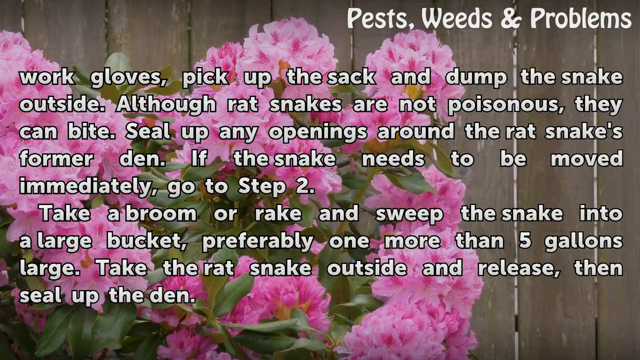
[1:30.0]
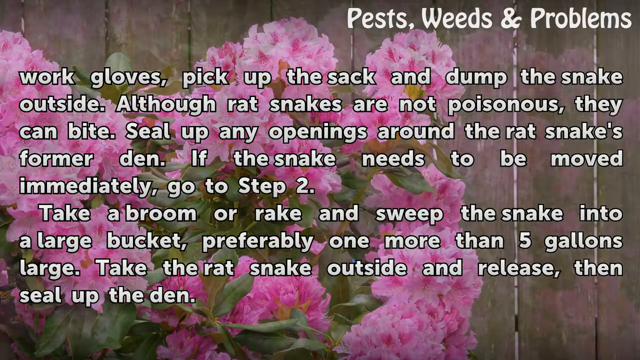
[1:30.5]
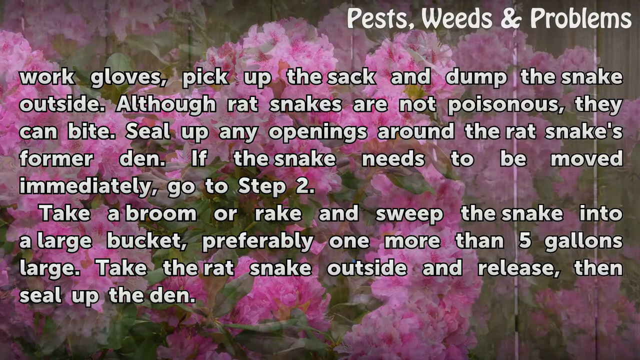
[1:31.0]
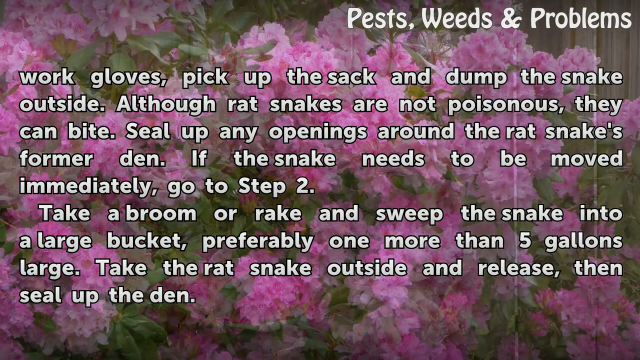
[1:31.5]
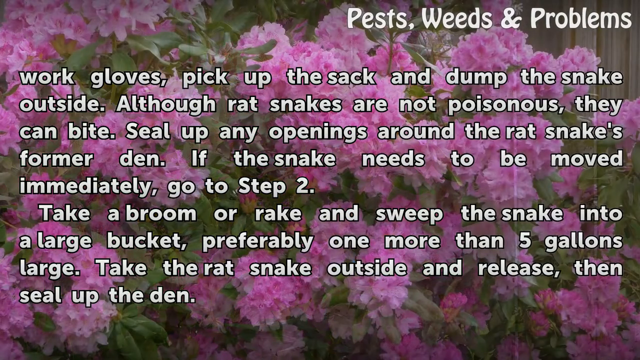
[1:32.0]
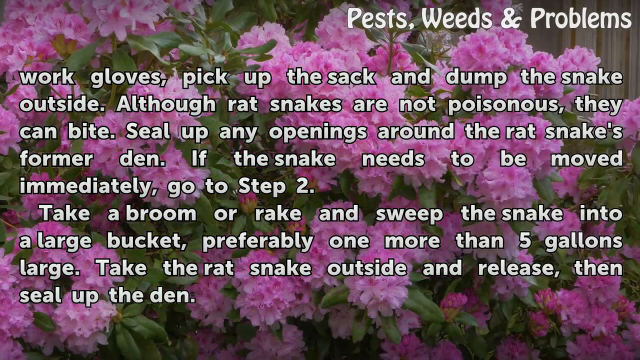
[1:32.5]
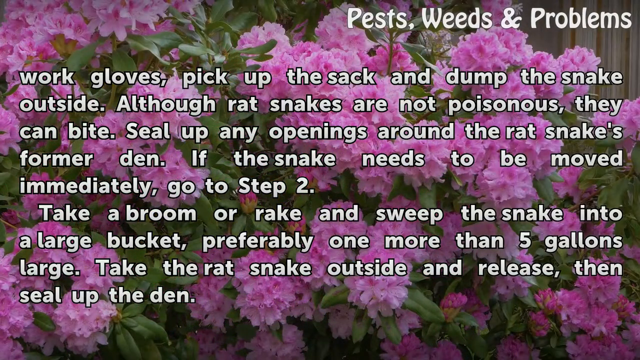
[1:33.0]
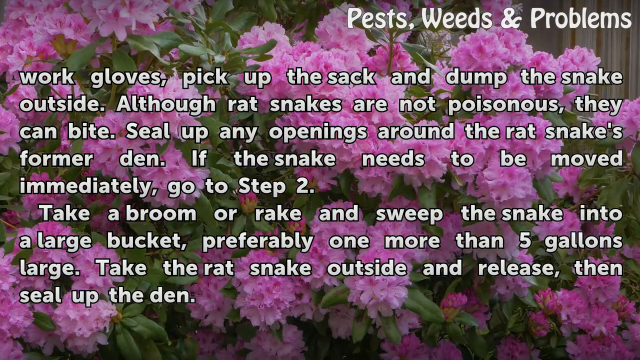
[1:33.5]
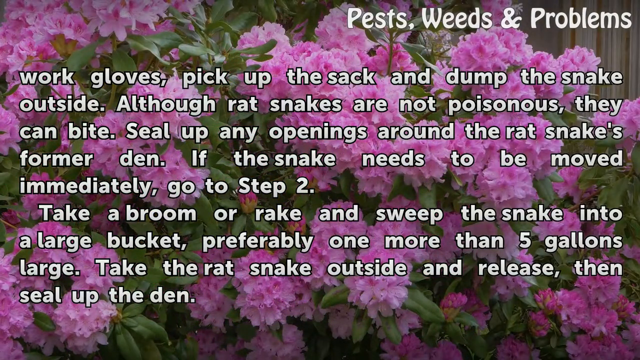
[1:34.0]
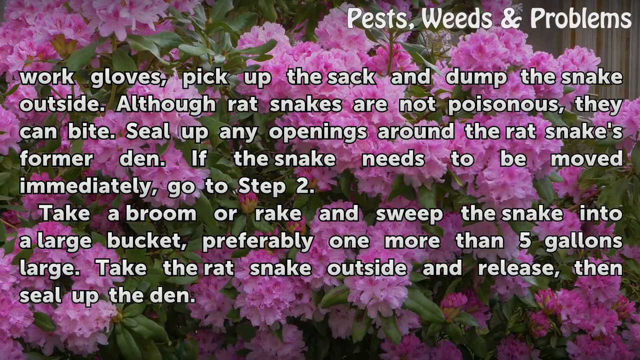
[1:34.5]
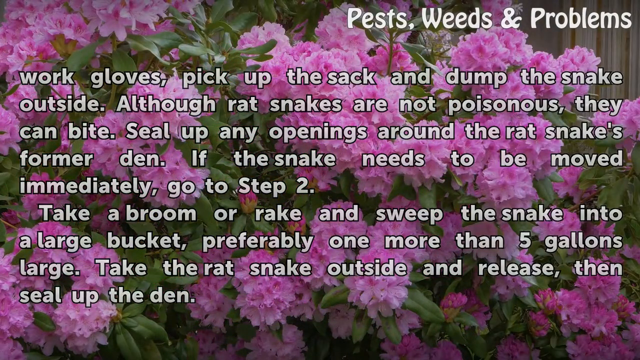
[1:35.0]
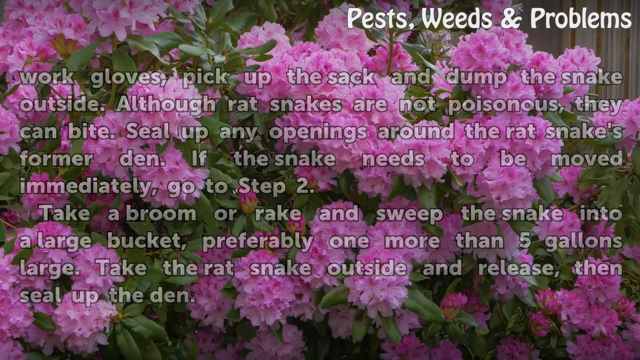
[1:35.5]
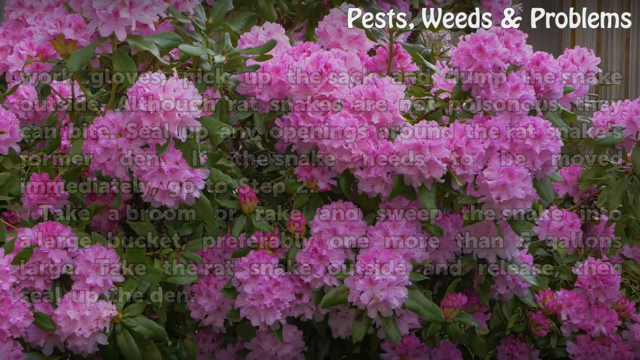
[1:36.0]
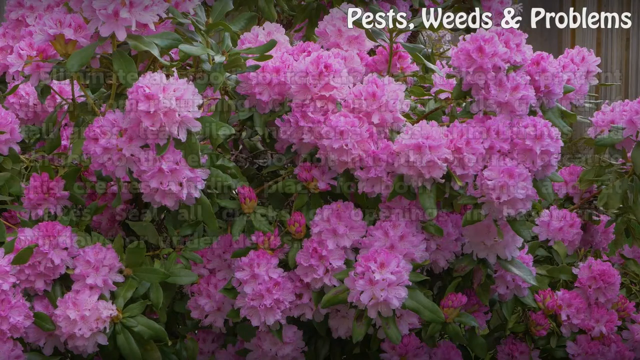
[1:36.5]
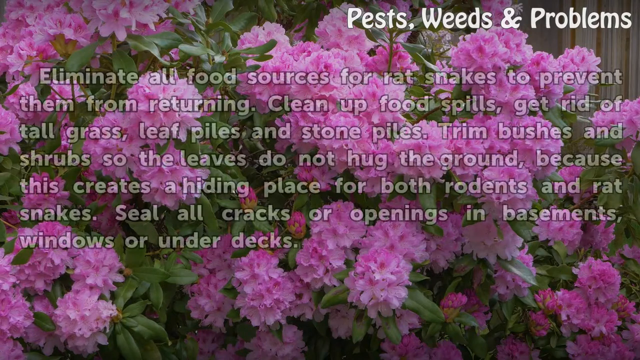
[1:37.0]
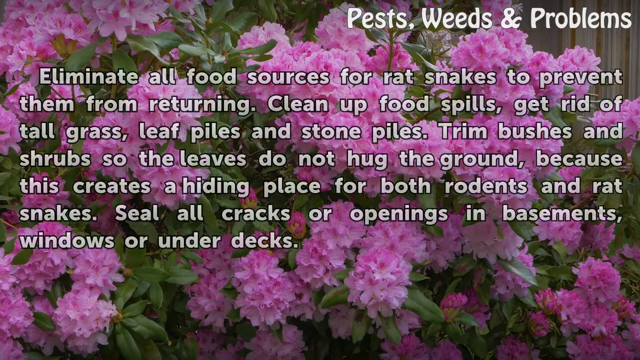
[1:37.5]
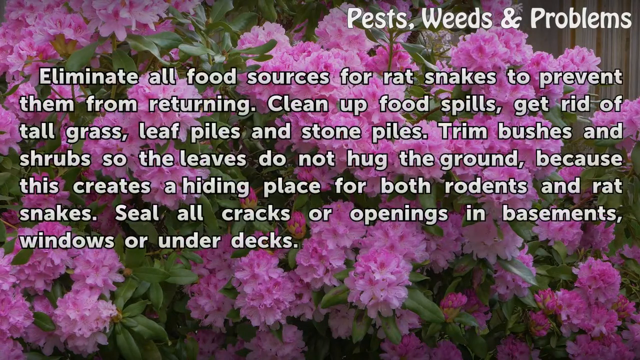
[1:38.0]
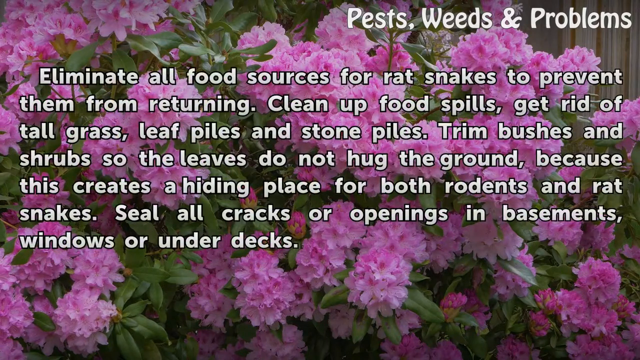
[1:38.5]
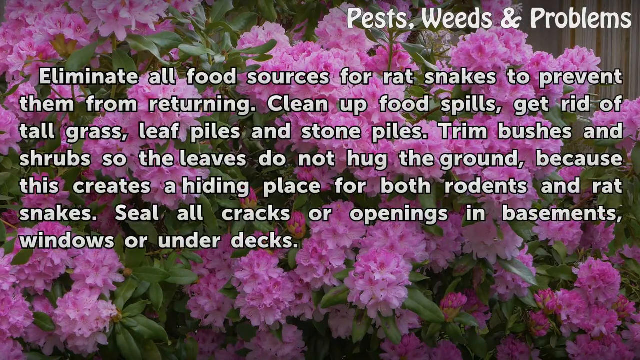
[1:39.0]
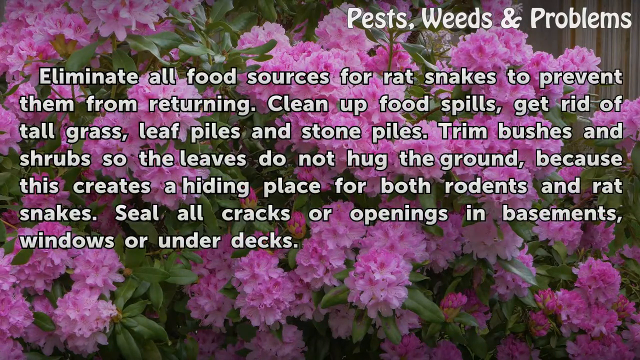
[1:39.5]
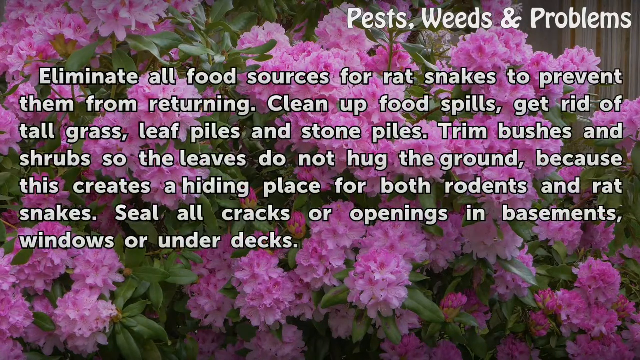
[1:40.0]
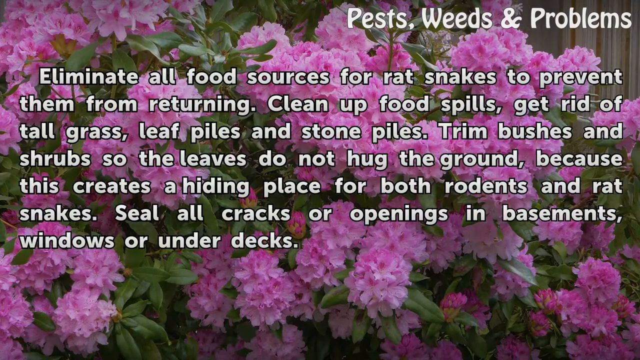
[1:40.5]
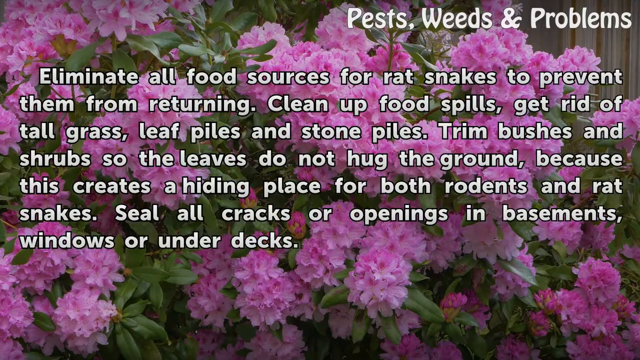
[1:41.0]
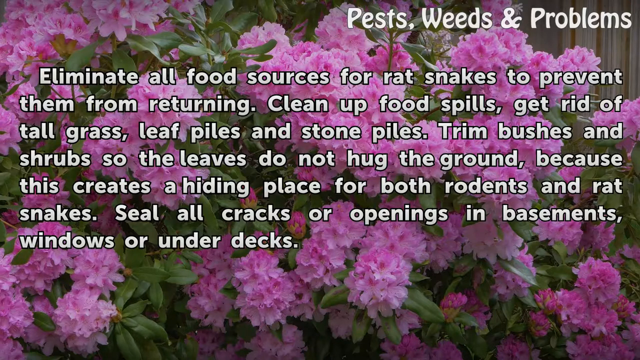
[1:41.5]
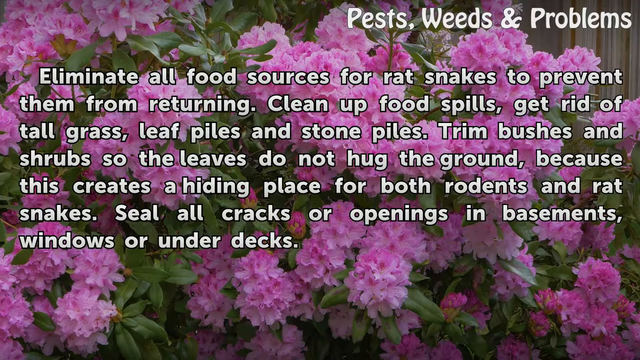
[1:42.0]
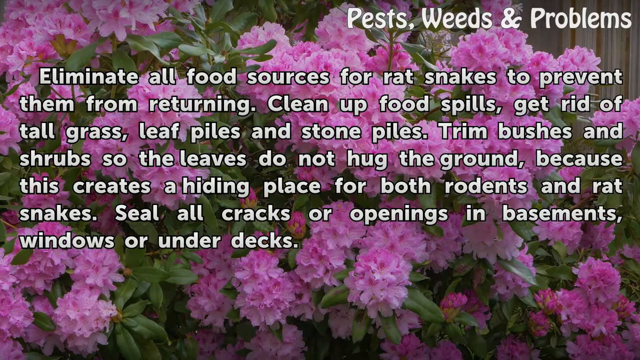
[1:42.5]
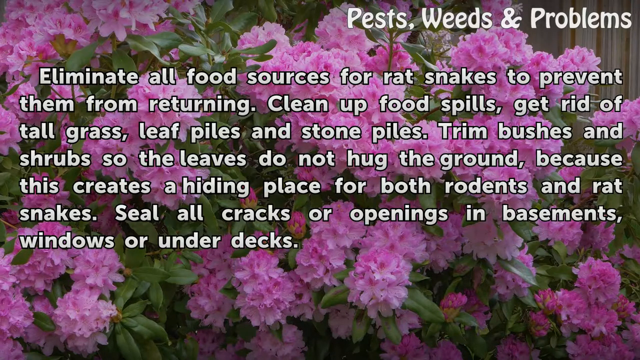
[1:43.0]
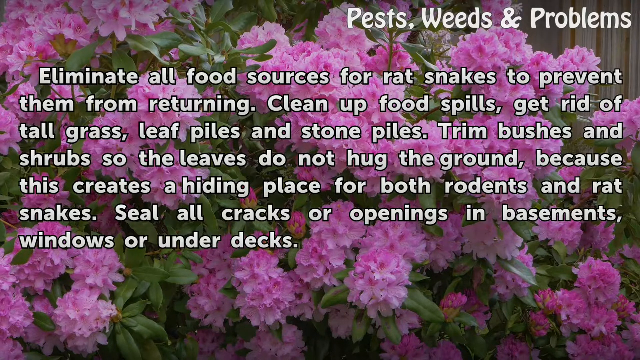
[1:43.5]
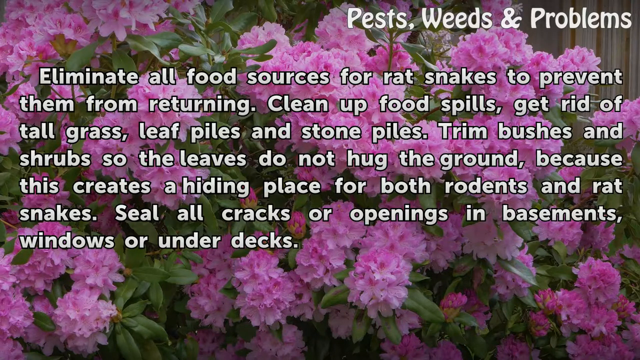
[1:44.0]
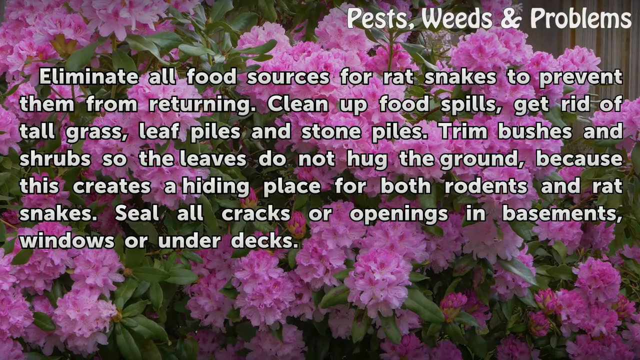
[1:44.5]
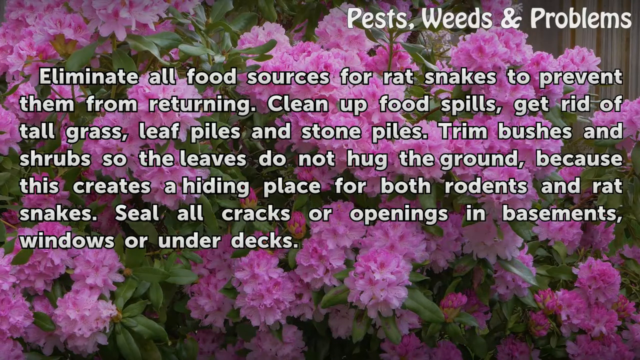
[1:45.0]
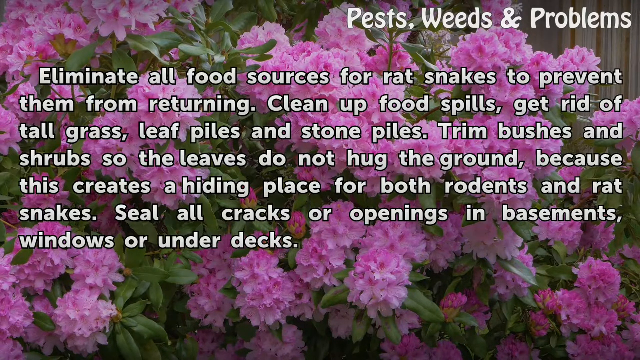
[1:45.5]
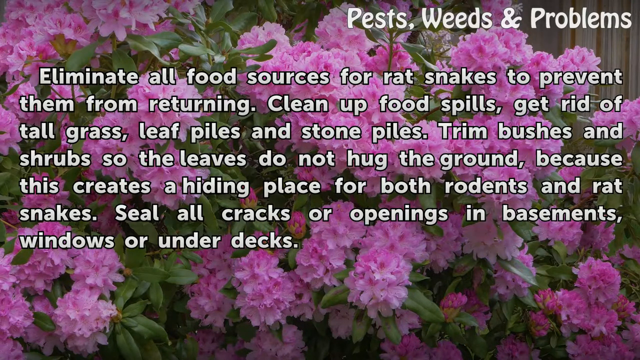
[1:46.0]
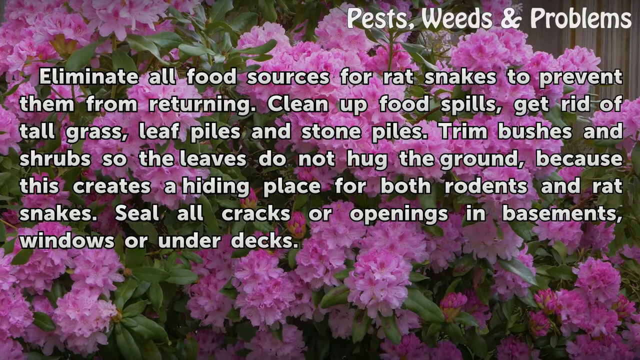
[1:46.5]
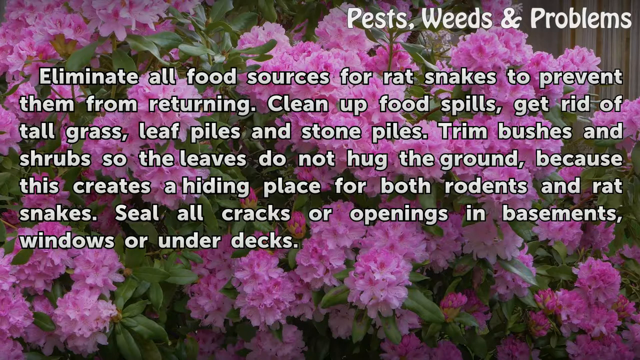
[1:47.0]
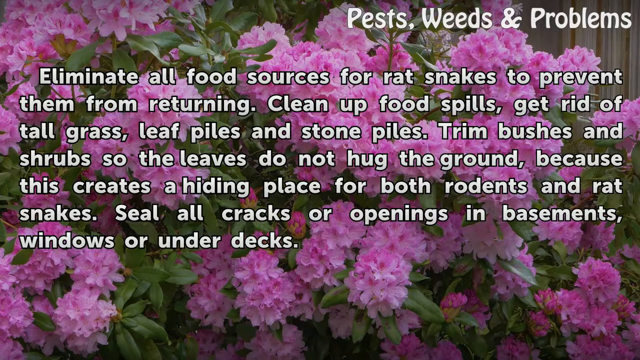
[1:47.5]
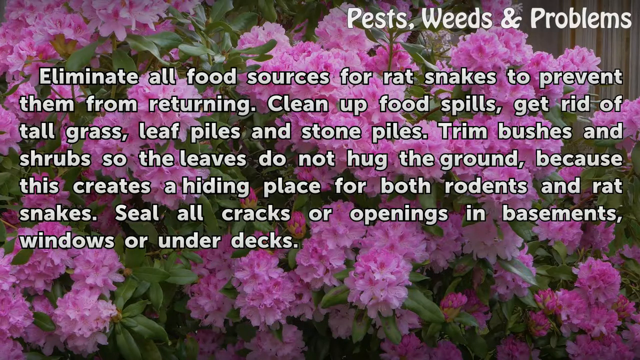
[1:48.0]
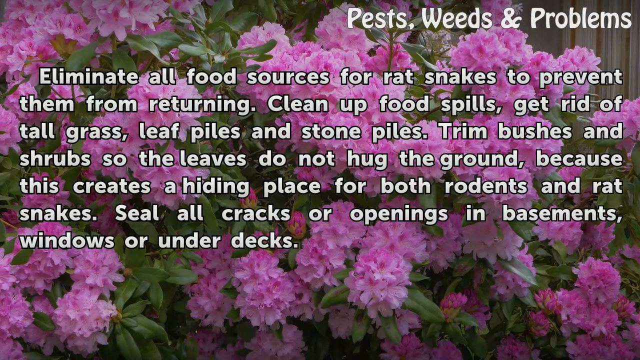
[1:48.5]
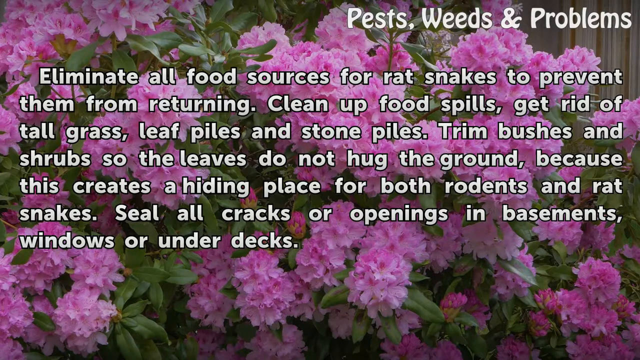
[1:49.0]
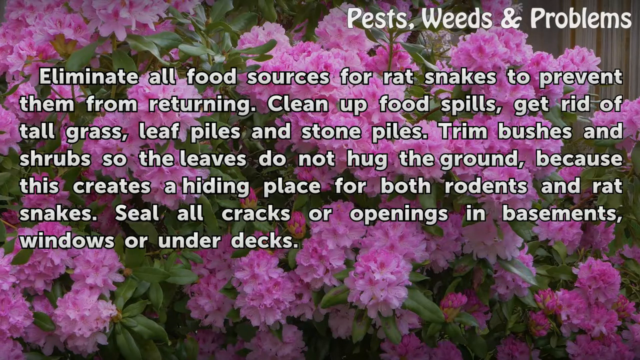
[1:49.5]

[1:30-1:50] A grey wooden paneled fence is in the background, with white lettering at the top right that says "Pests, Weeds, and Problems." Wording running downward in the center says "Work Gloves, pick up the sack, and dump the snake outside. Although rat snakes are not poisonous, they can bite. Seal up any openings around the rat snake's former den. If the snake needs to be moved immediately, go to step two. Take a broom or rake and sweep the snake into a large bucket, preferably one more than the five gallons large. Take the rat snake outside and release, then seal up the den." Flowers on the left side have green stems and green leaves, with pink and darker pink petals up at the top. The background then changes to show the same pink and darker pink petals in a much larger section, with more green leaves in between.